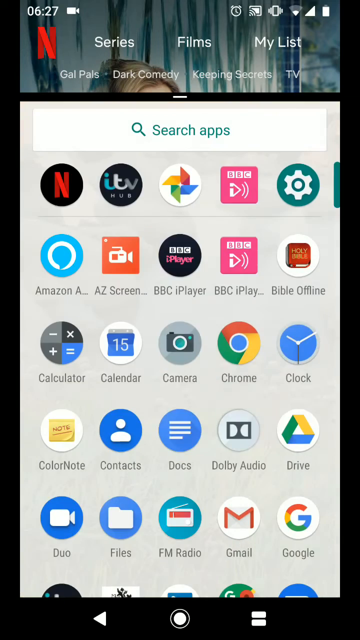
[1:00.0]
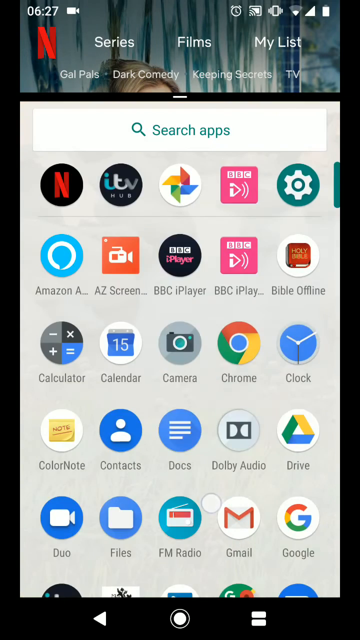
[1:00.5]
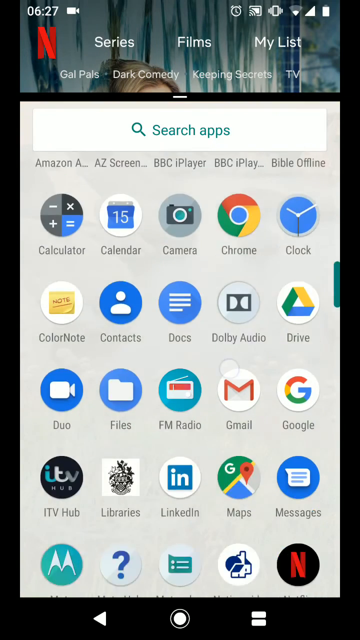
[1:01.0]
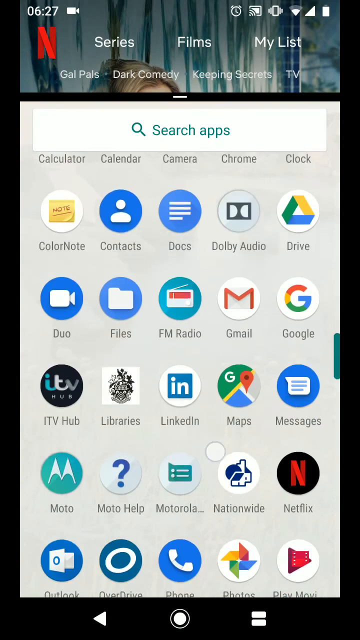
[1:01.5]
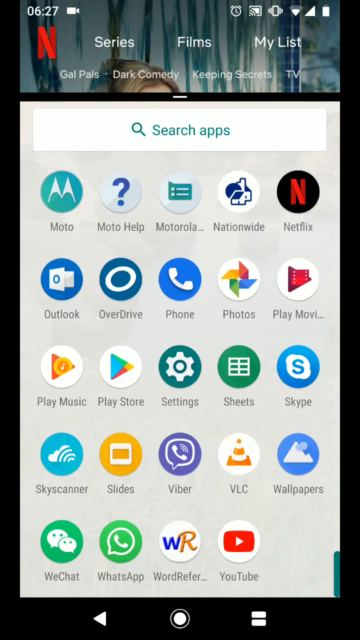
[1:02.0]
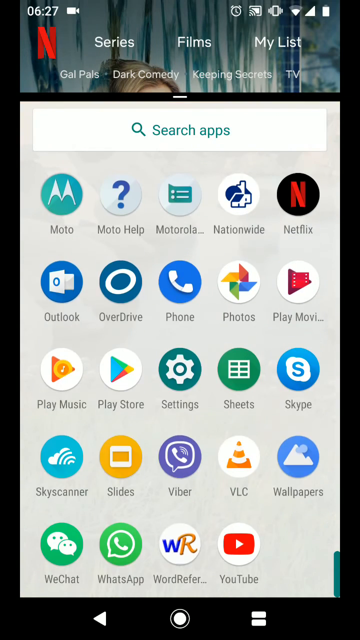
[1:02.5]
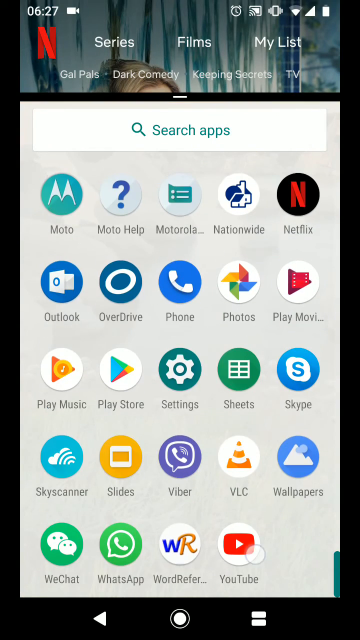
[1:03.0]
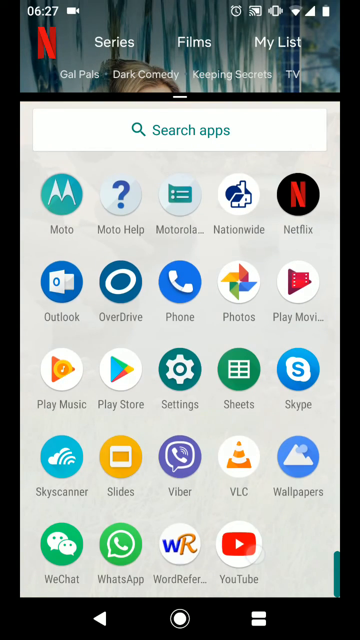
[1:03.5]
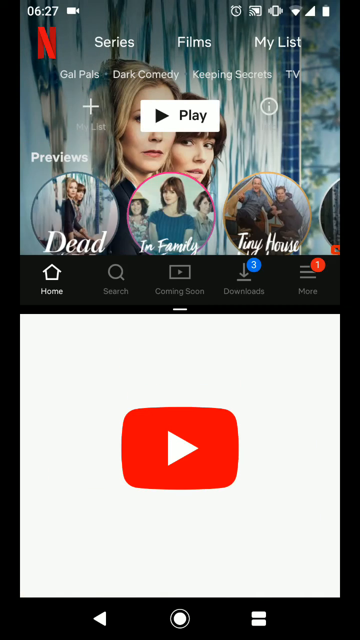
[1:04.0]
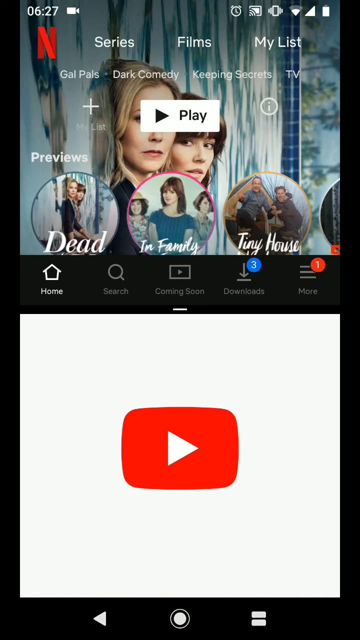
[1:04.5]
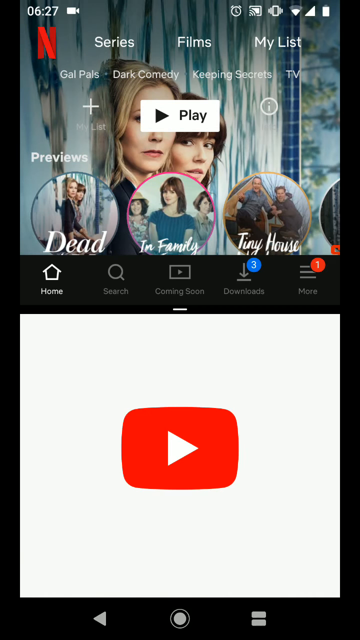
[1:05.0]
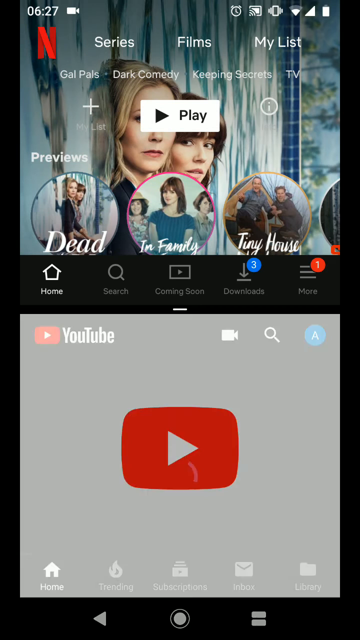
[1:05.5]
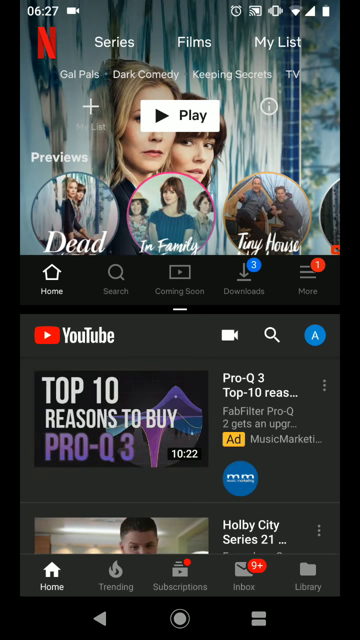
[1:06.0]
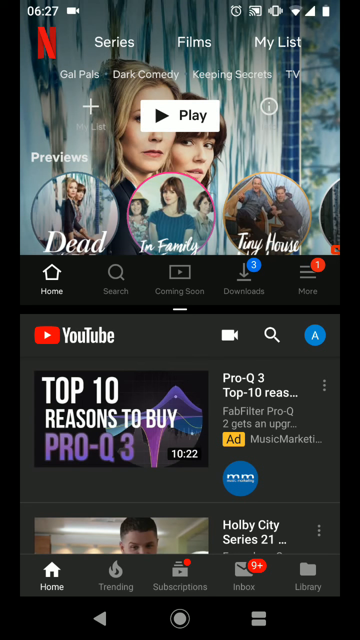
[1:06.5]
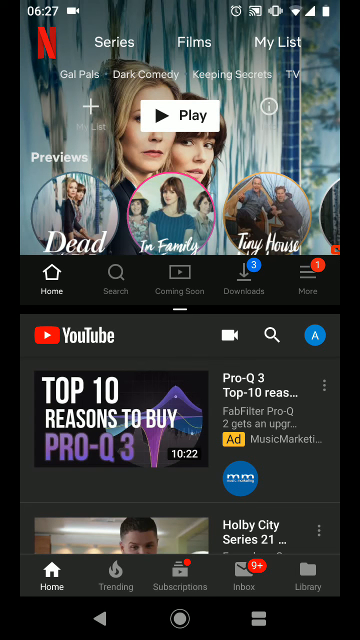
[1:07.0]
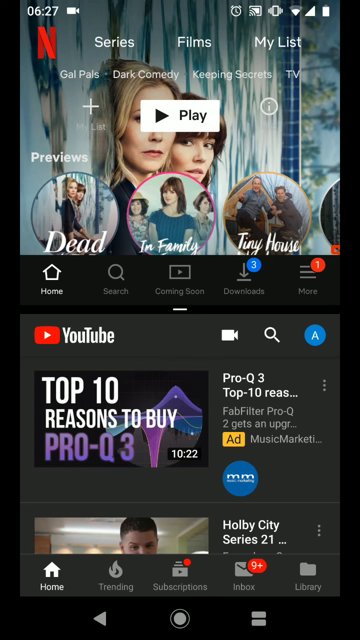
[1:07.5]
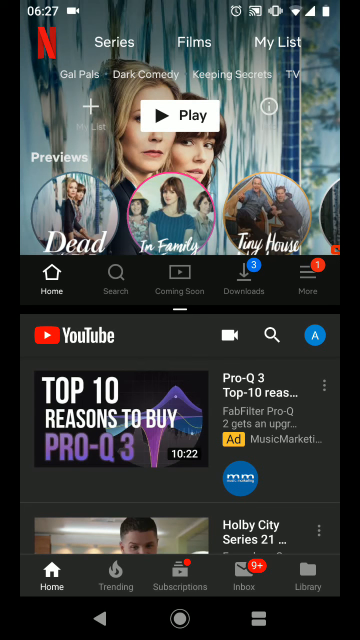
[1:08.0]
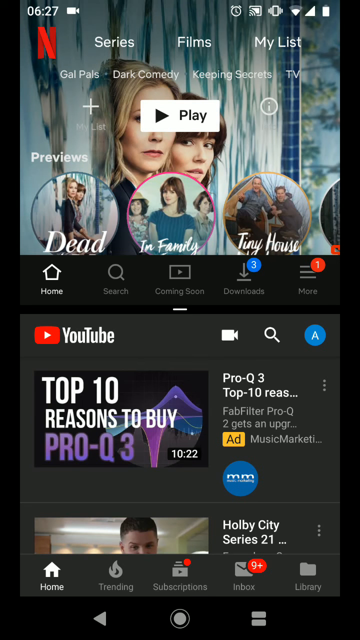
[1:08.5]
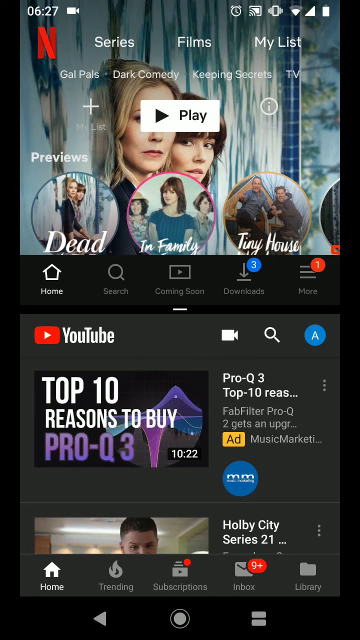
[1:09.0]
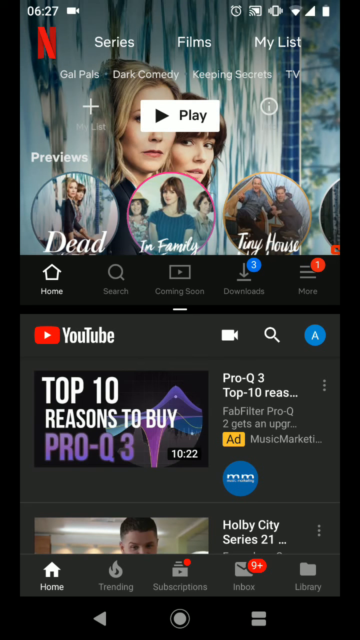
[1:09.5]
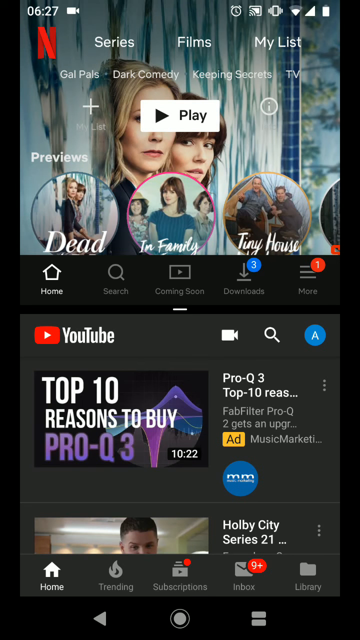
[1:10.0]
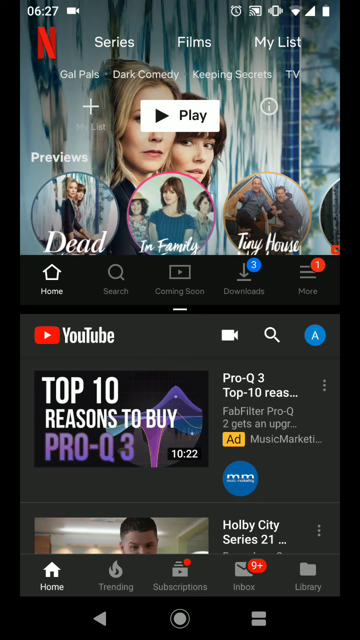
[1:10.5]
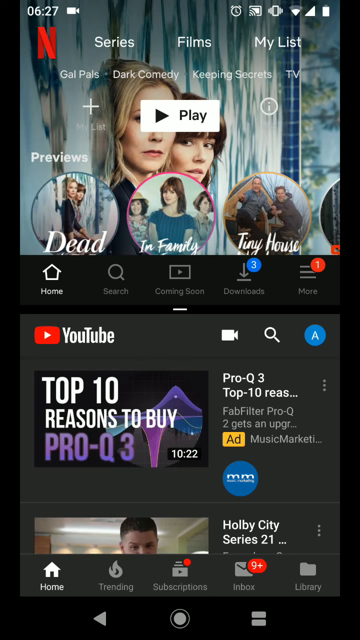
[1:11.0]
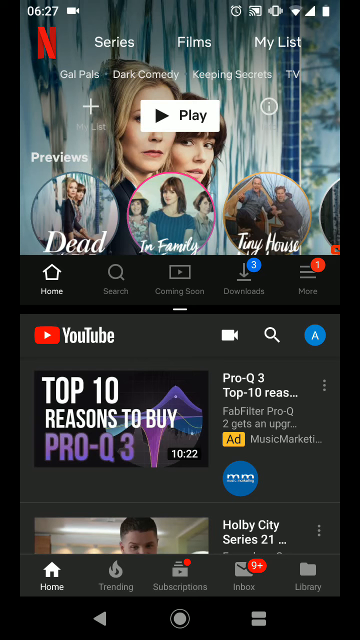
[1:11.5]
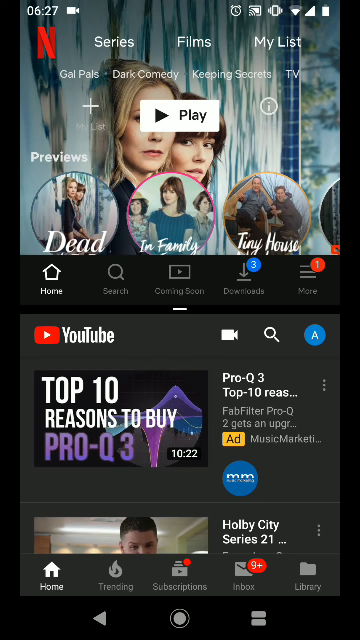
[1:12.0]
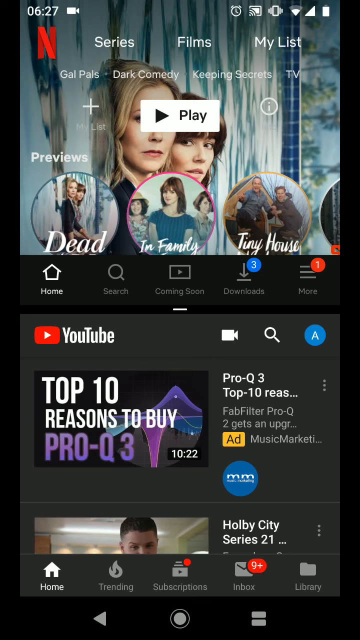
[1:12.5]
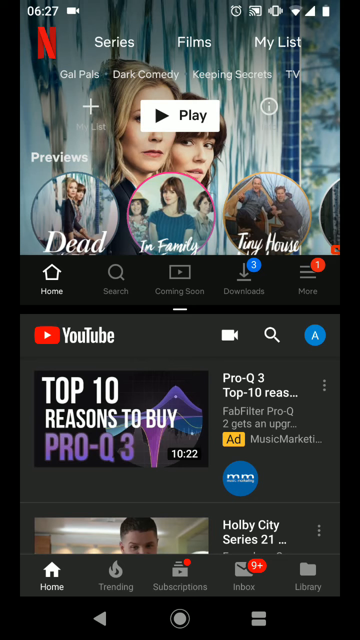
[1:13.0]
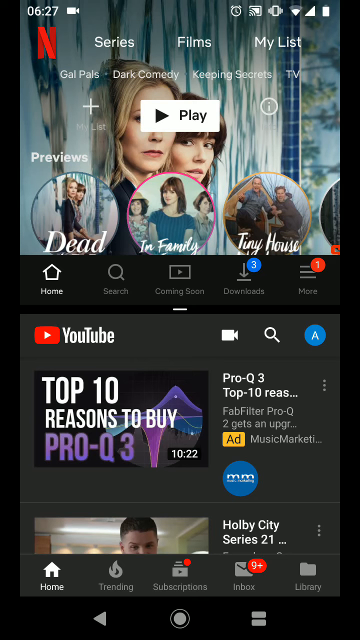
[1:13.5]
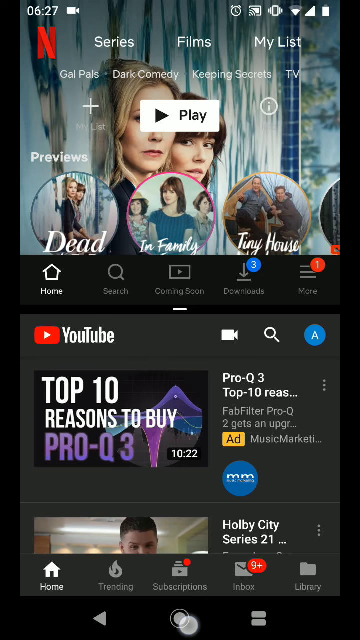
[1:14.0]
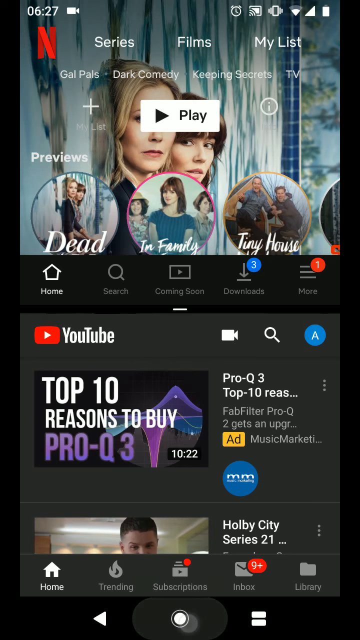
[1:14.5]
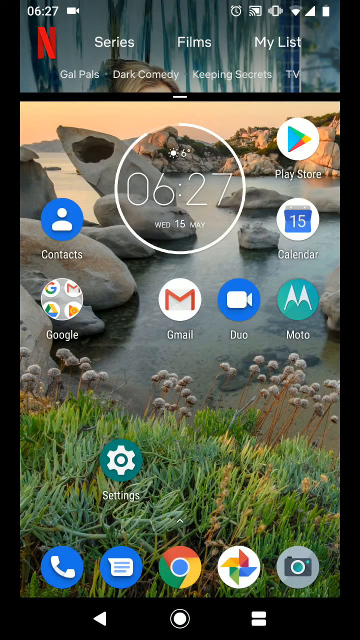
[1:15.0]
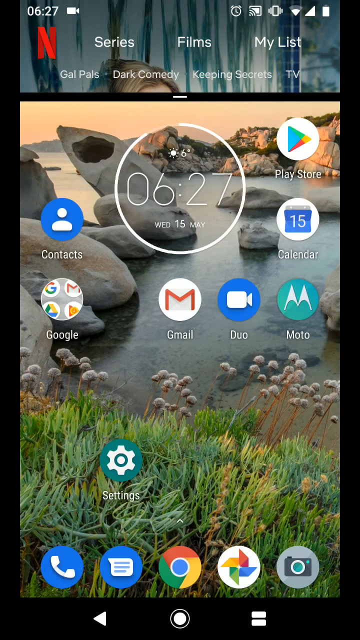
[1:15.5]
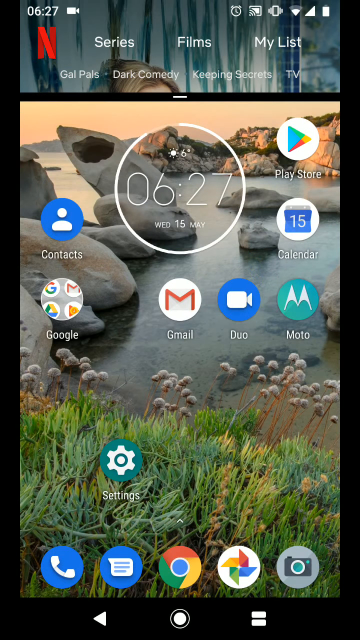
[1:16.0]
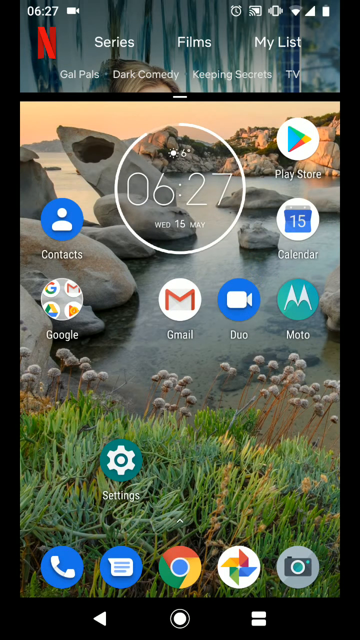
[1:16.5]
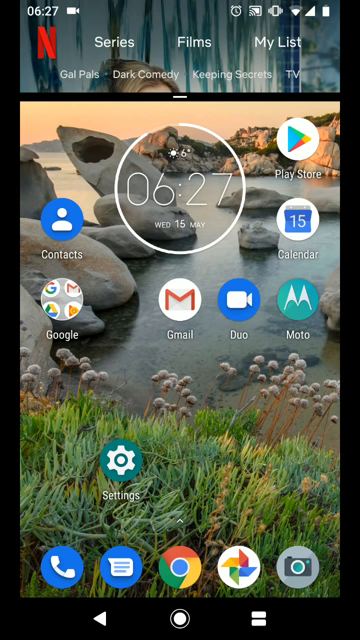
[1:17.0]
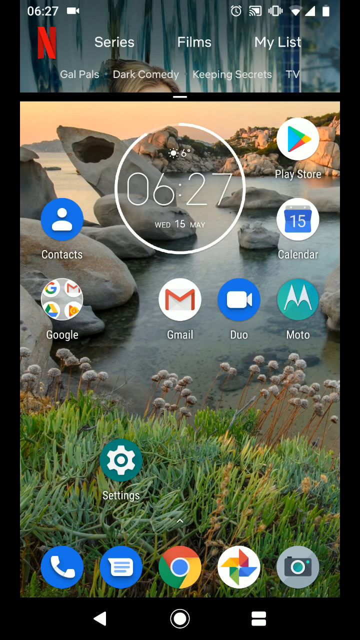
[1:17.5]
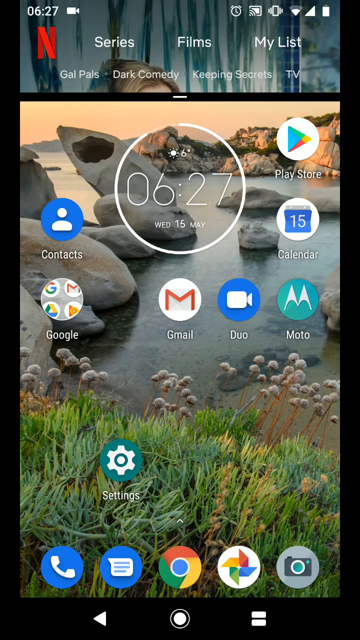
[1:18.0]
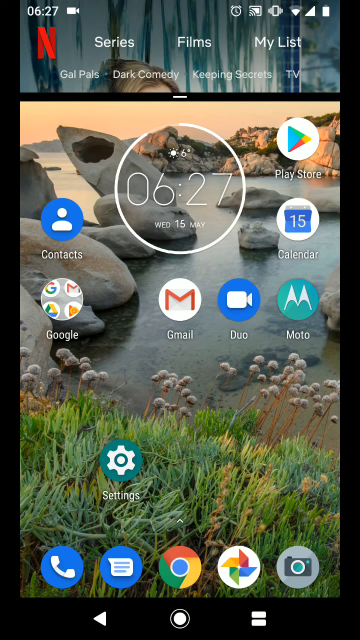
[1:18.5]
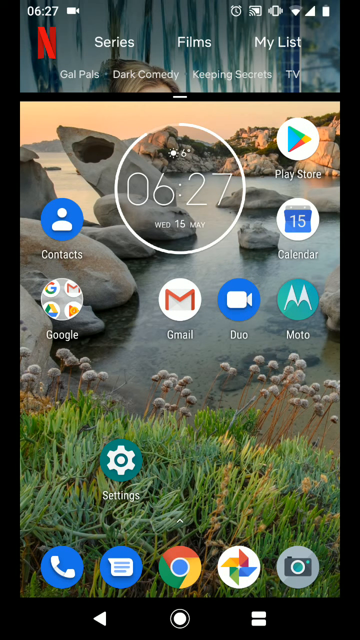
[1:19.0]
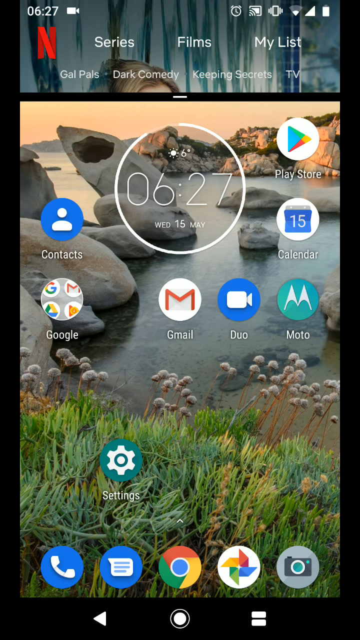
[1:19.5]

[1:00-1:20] With the screen split and Netflix at the top, the user selects another application from the home page. The user scrolls down to YouTube and selects it, and the YouTube page loads in the lower part of the screen, while Netflix on top shows a movie with a play icon. The Netflix section at the top also shows icons such as home and search, plus a download button. The user closes YouTube and returns to the home page briefly, then scrolls up to show additional icons and apps.